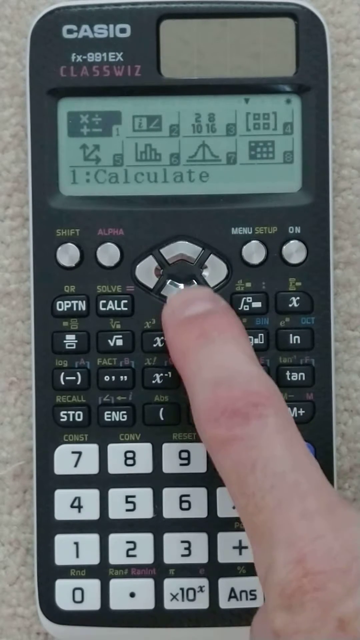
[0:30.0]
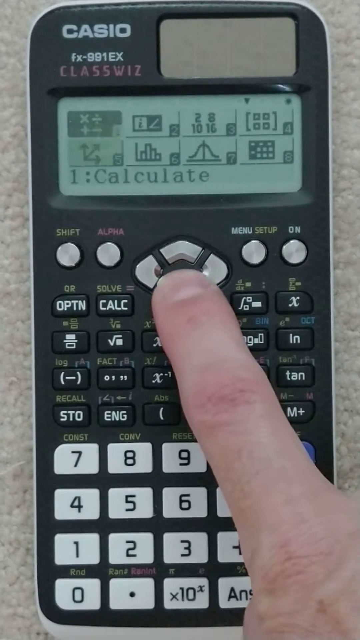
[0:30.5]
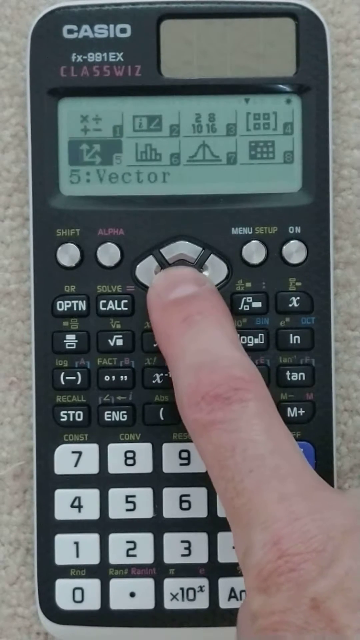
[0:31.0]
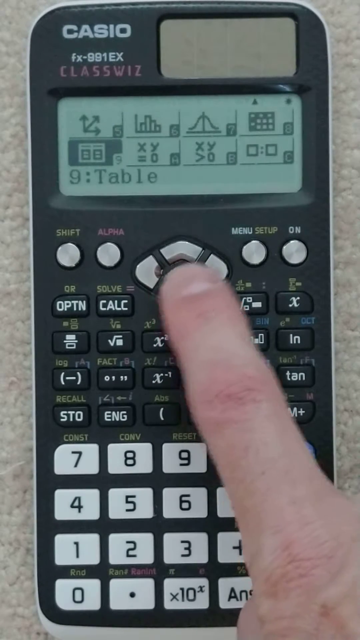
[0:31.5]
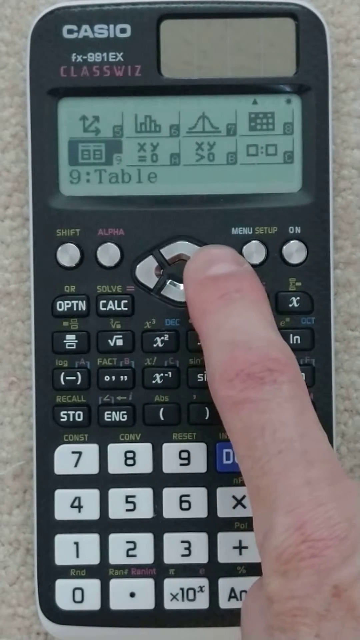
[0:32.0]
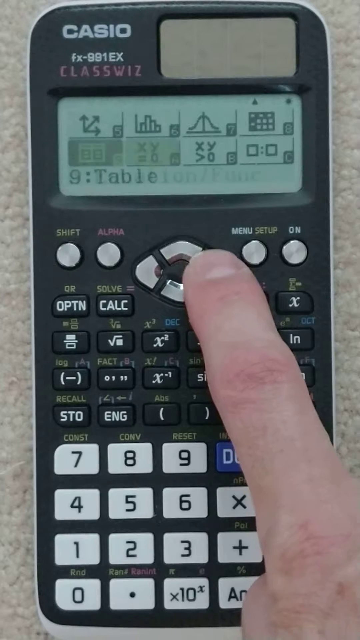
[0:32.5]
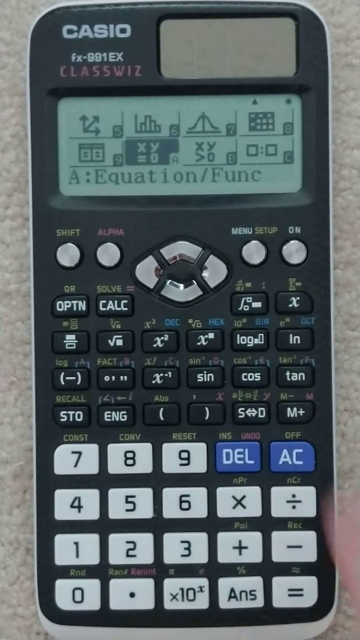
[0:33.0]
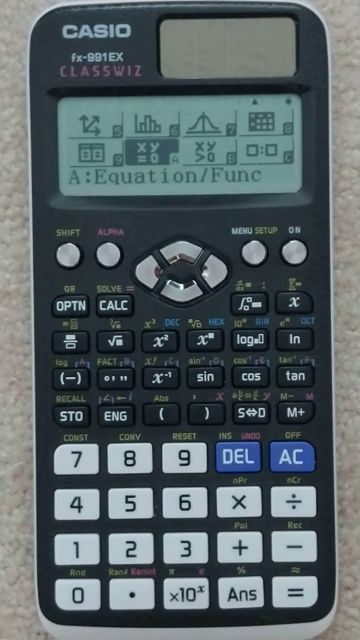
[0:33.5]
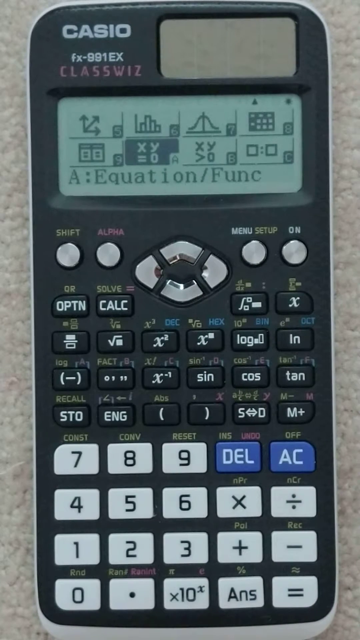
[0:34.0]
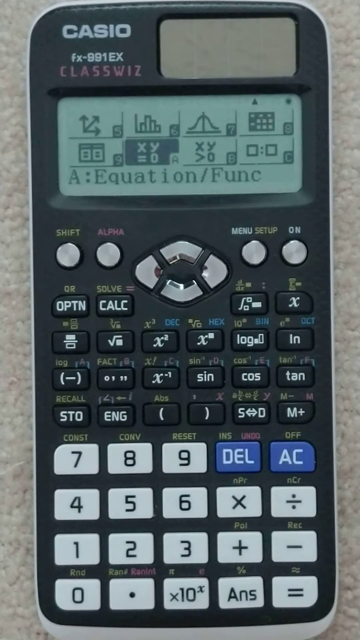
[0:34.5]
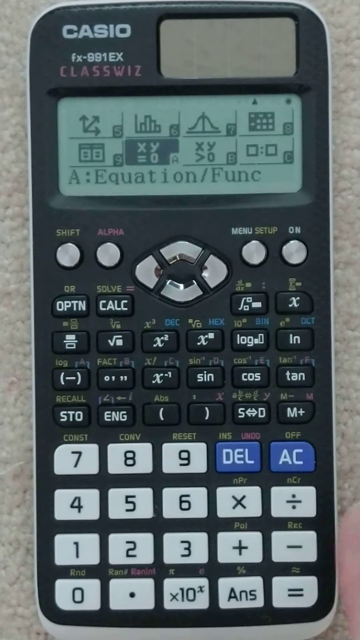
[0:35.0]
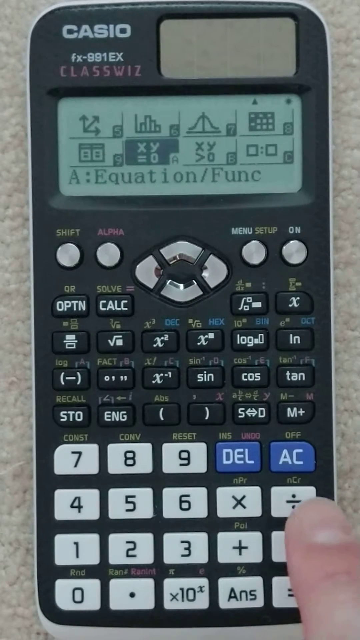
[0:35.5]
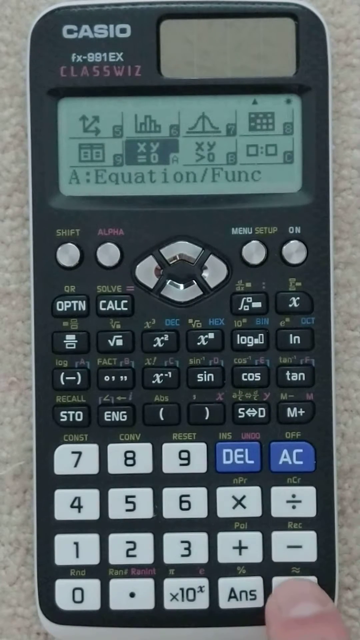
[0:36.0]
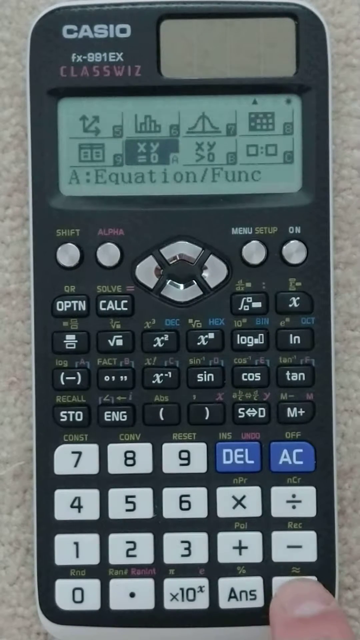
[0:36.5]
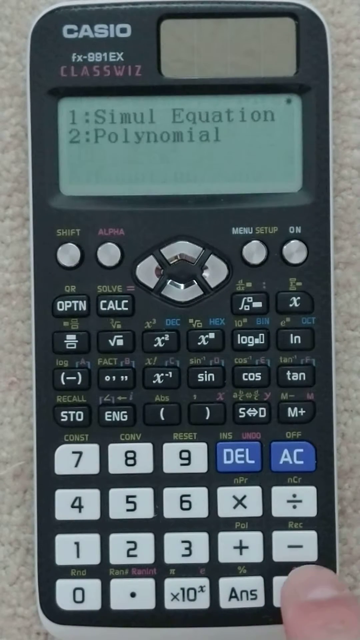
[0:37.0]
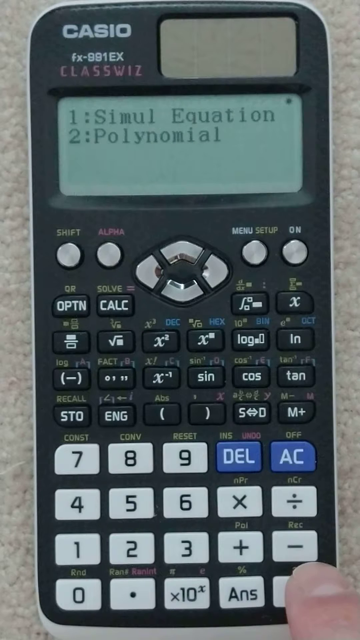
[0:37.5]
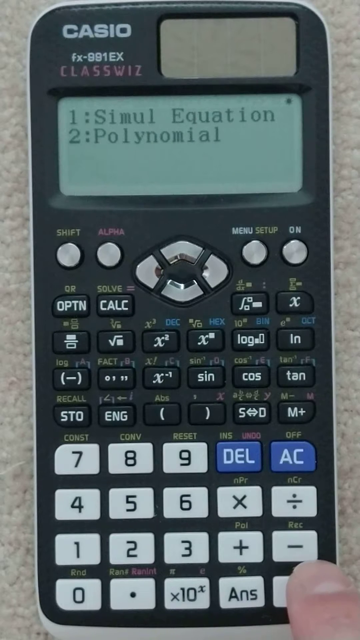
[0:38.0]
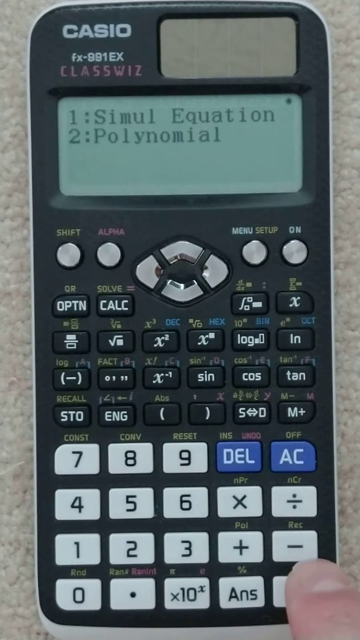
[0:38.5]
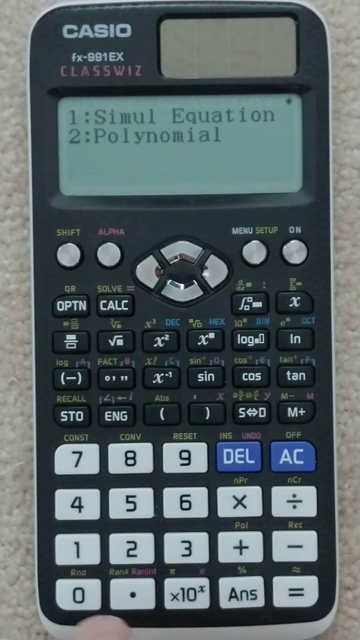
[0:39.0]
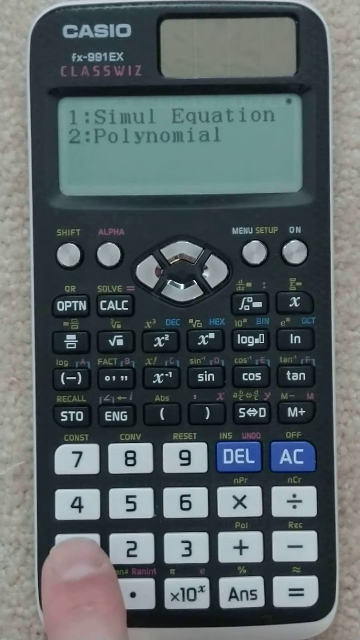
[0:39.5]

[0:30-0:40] The calculator screen moves on to another set of options, going from table to equation functions, and then to a two-line list featuring 1, "simul equation", and 2, "polynomials". The user selects the options that bring up this two-option list, which is shown only very briefly.